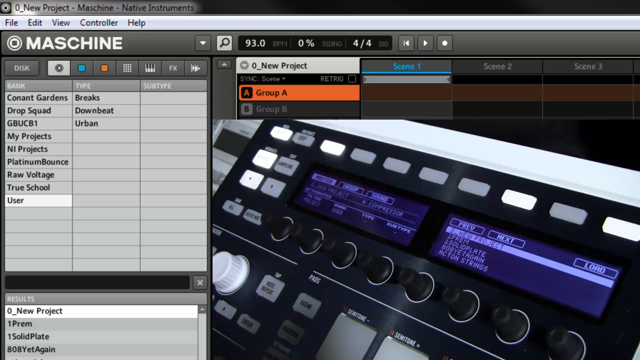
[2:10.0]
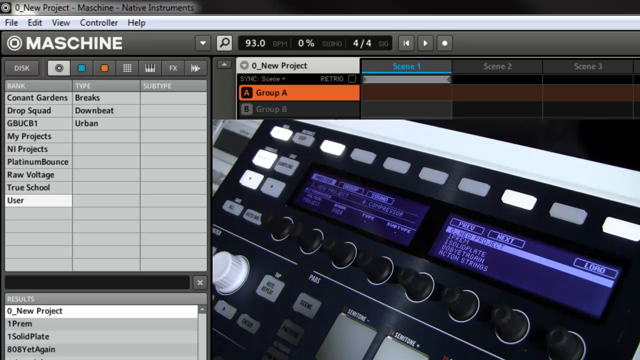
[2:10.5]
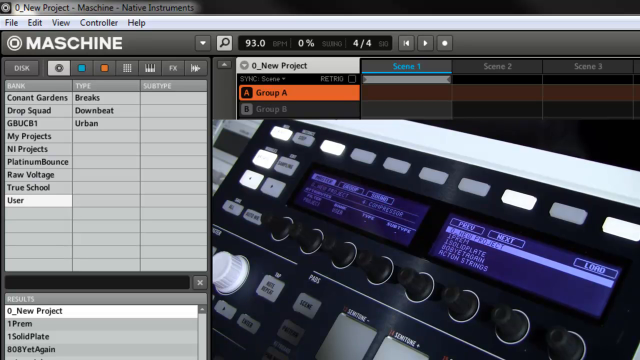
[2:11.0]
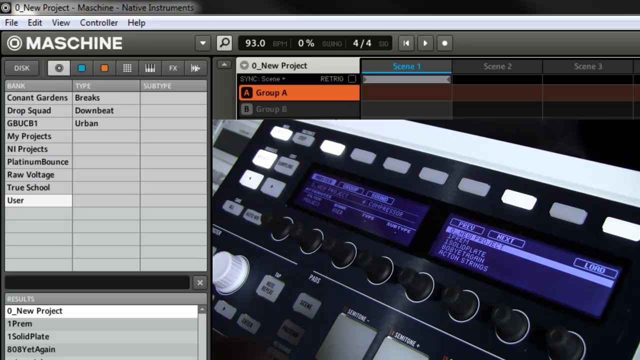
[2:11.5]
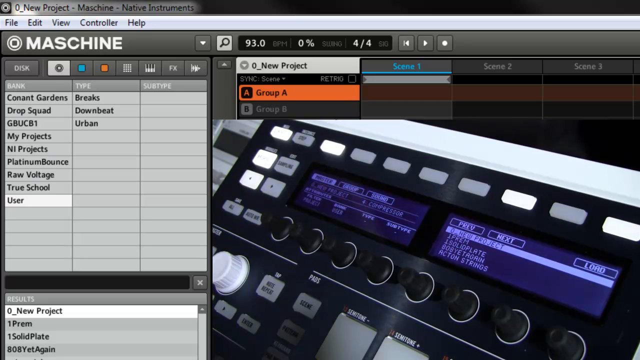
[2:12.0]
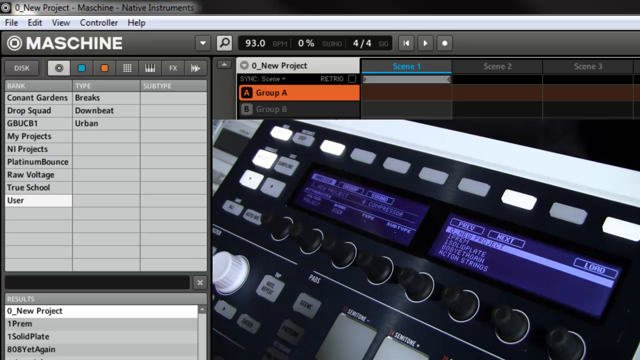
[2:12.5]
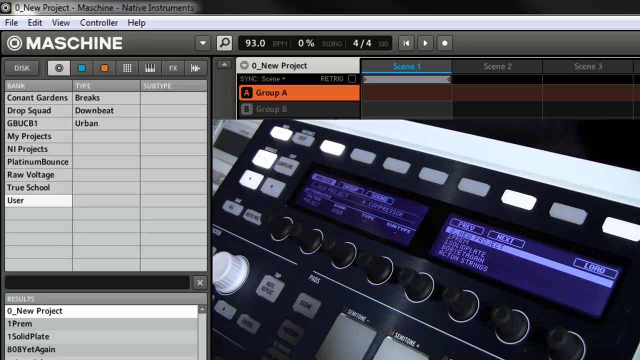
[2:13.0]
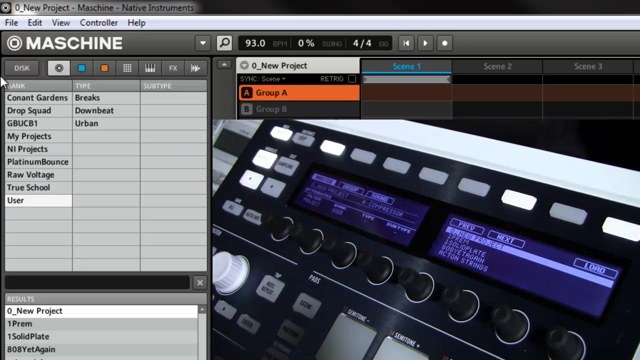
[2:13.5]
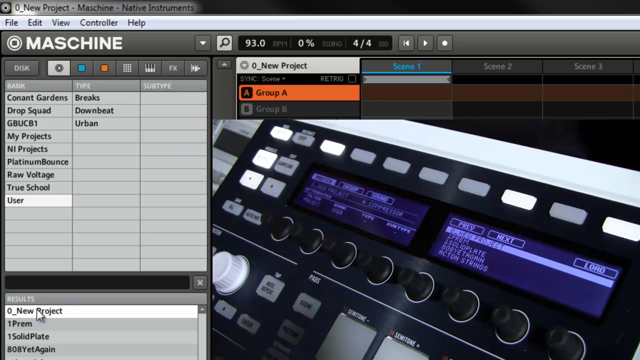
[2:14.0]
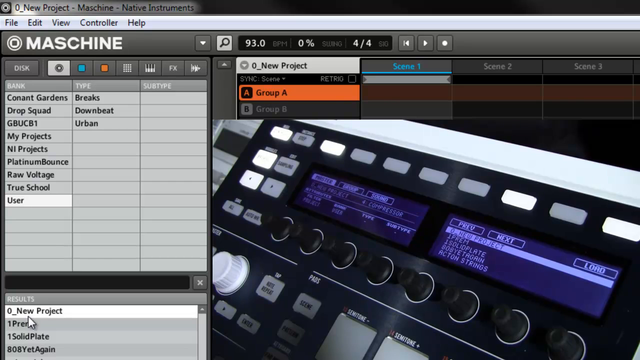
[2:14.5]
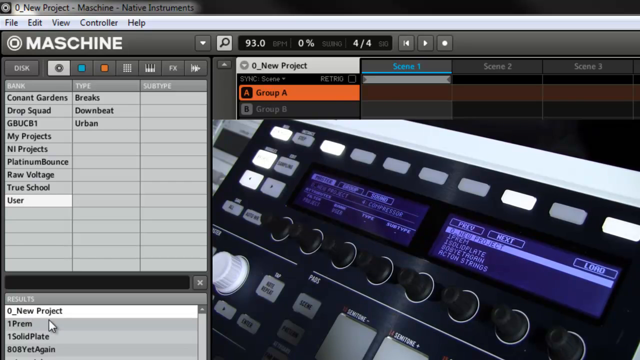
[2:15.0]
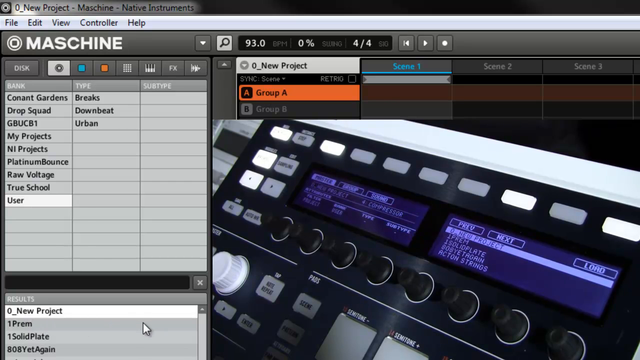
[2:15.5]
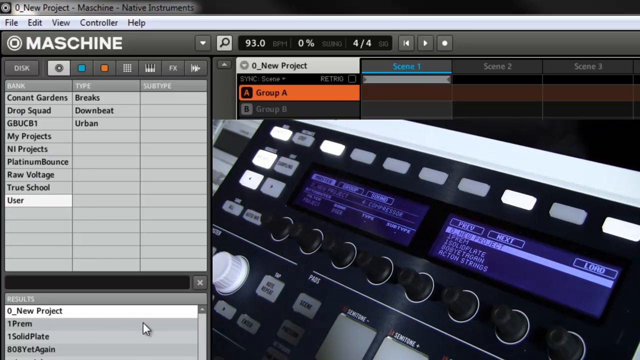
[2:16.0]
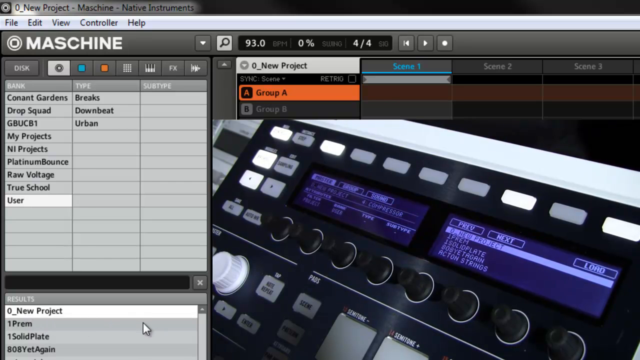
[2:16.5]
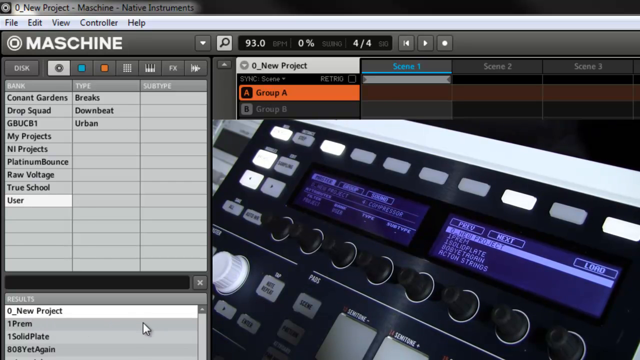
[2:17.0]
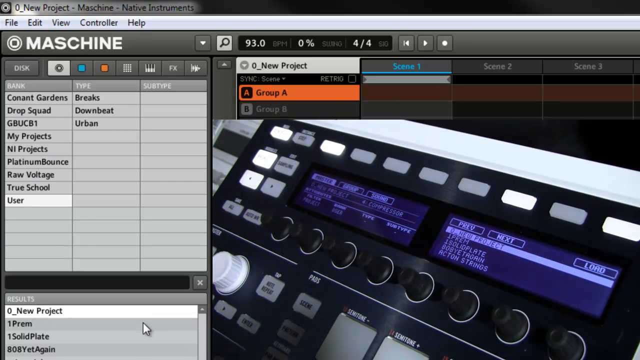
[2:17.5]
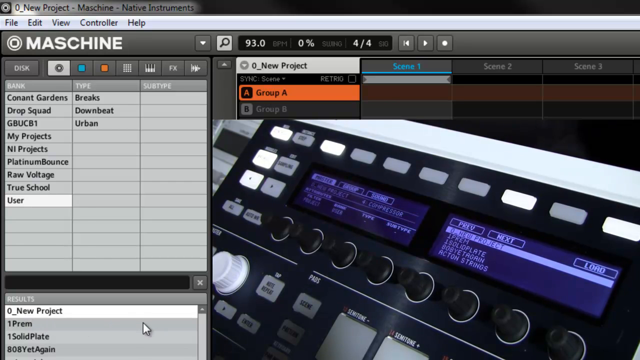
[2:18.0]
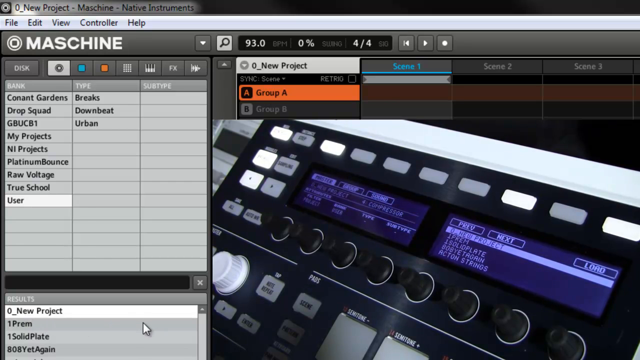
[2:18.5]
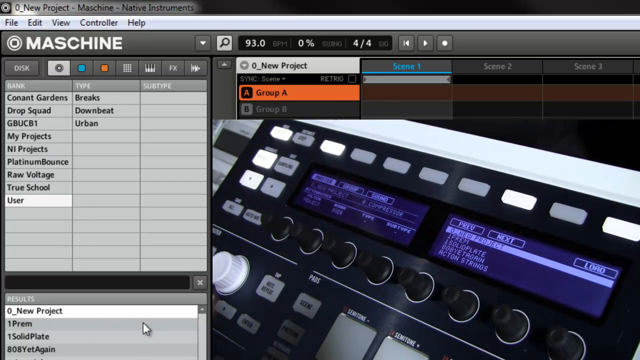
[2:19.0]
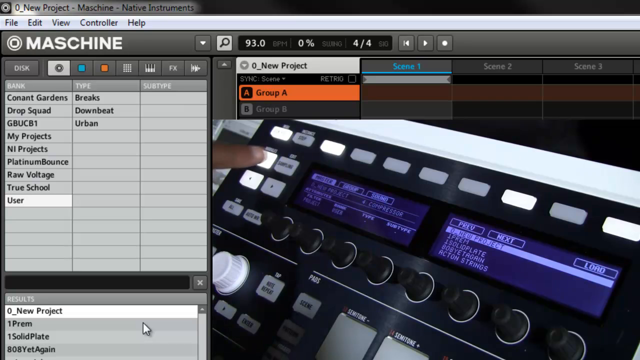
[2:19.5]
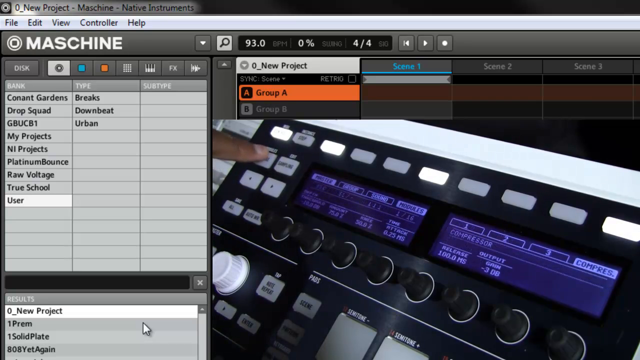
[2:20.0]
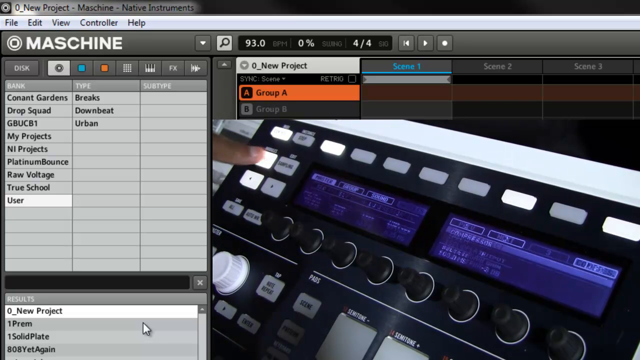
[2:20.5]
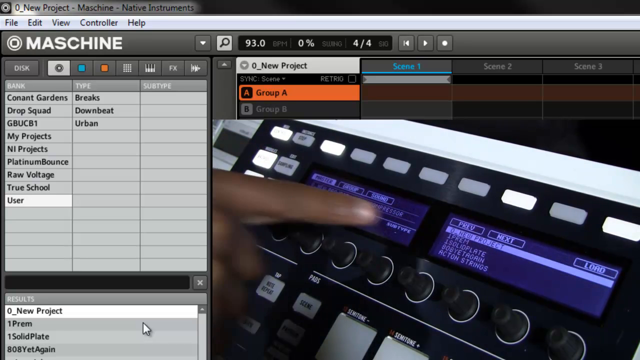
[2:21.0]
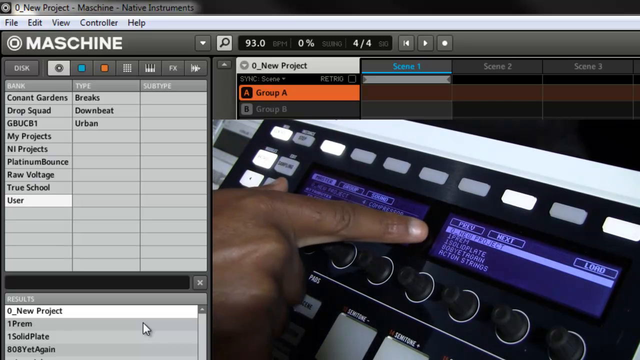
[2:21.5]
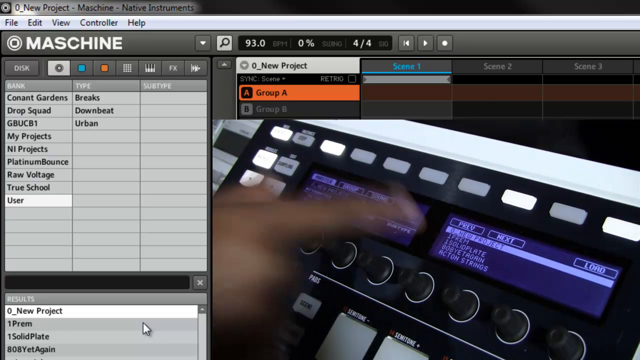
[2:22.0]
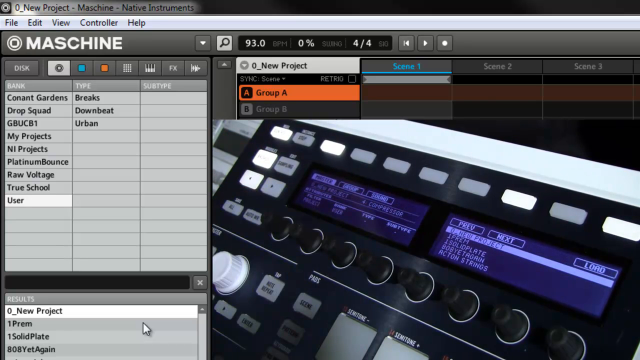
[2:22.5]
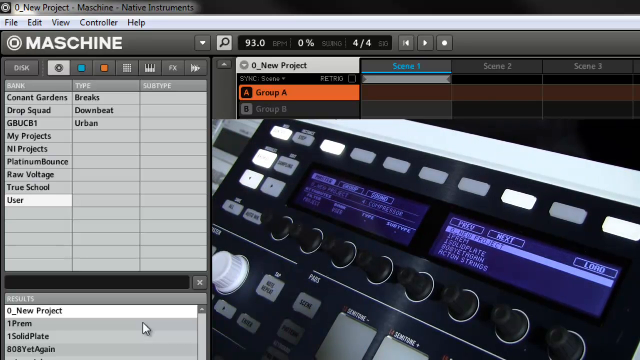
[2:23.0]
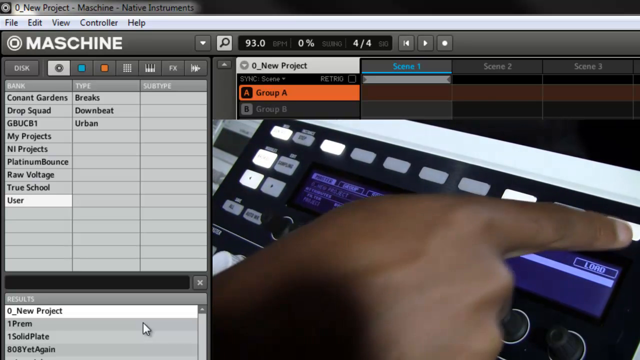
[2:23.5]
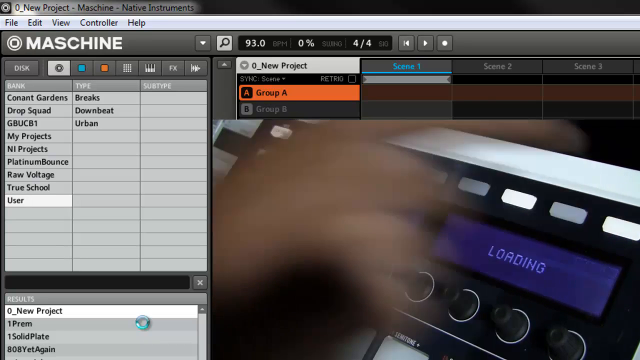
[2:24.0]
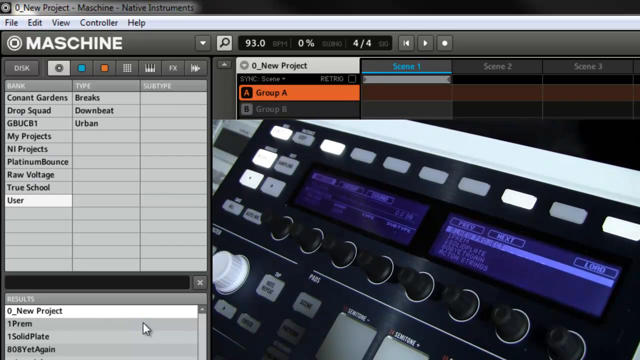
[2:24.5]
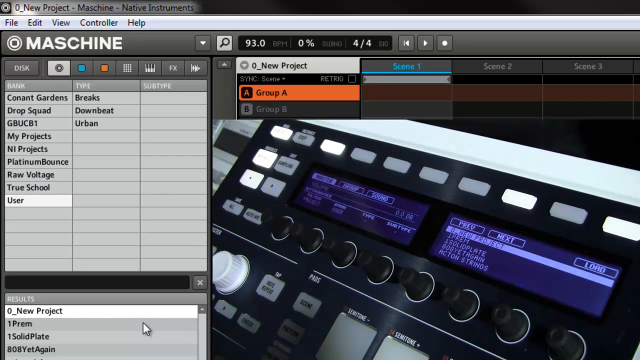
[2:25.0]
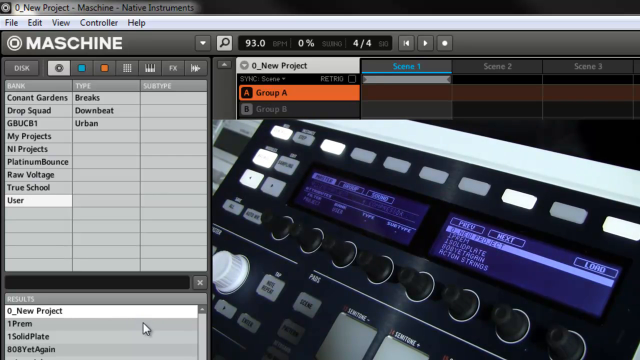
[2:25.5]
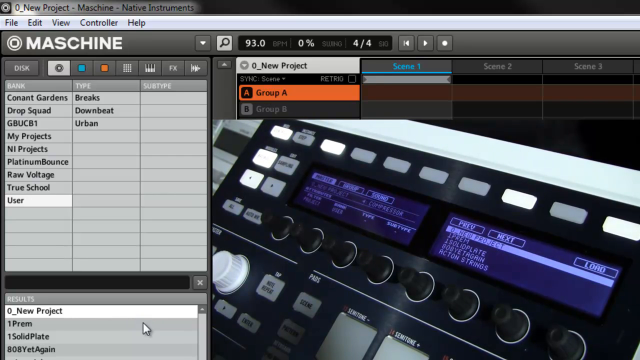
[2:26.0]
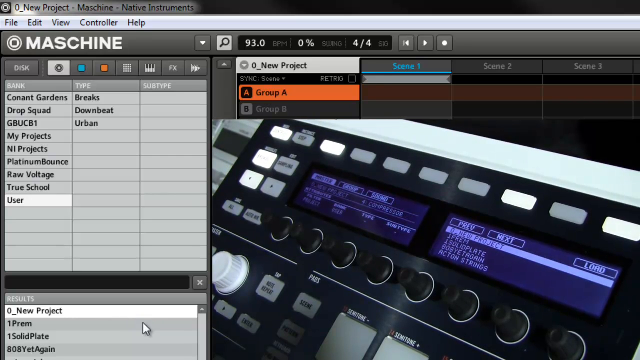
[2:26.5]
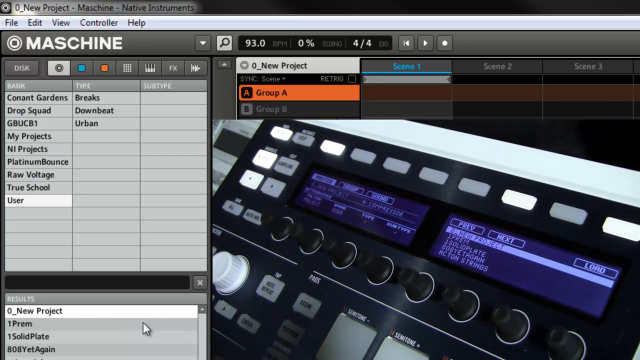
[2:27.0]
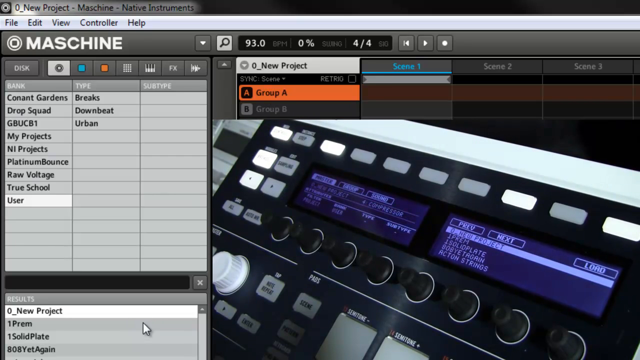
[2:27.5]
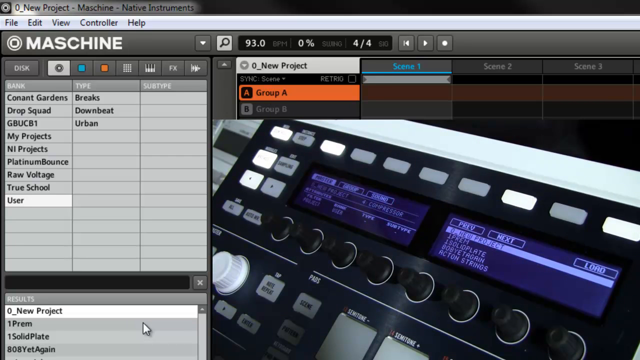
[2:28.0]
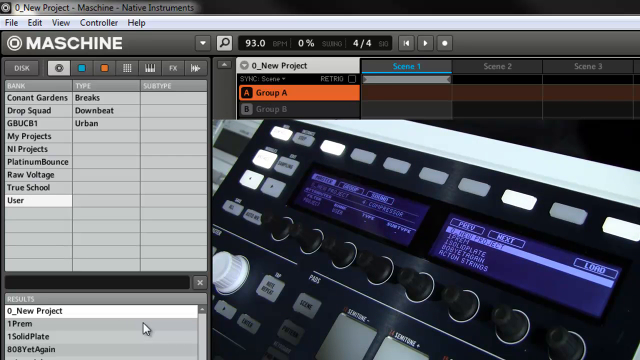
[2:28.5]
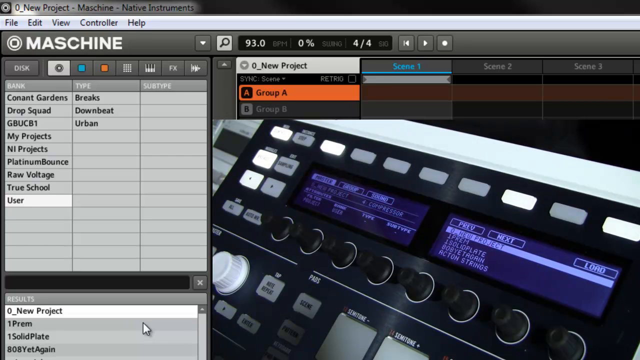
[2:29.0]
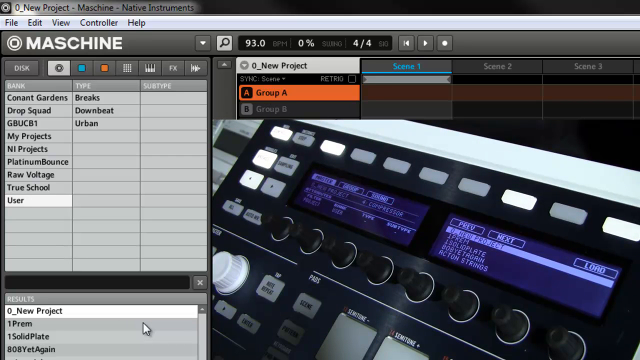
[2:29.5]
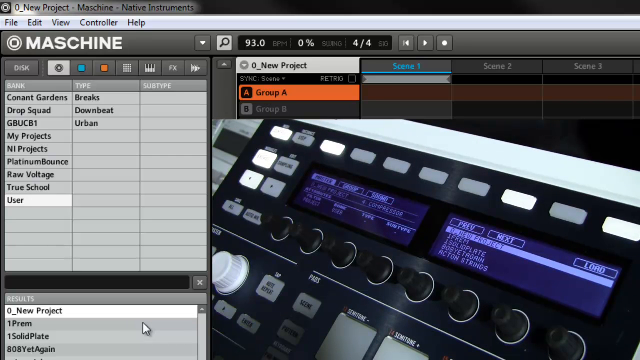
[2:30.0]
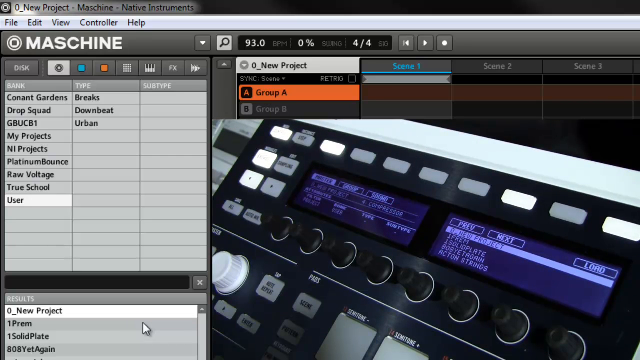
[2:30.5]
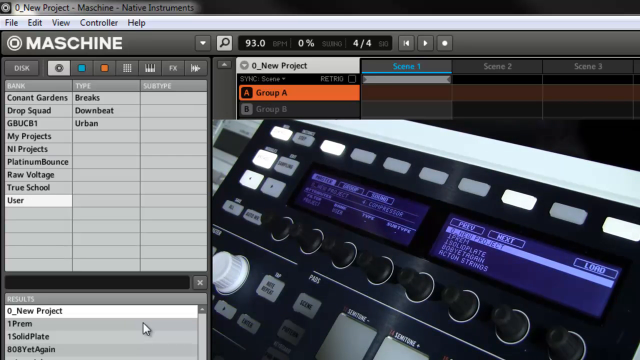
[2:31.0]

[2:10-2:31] The interface and the video of the console continue to be shown. The mouse begins moving on the left side of the screen, going up to the top and then down to the bottom, highlighting one of the text items. The hand comes back in from the left side of the video with a finger shown, and one of the buttons on the far left and one of the buttons below it light up. The hand goes over to the screen on the left, is withdrawn to the left side of the screen, comes back in from the bottom and touches the screen, and one of the buttons lights up. The contents of the screens change: the right one shows a list of information with three buttons above it, and the left one seems to show a grid of information with three tabs at the top.